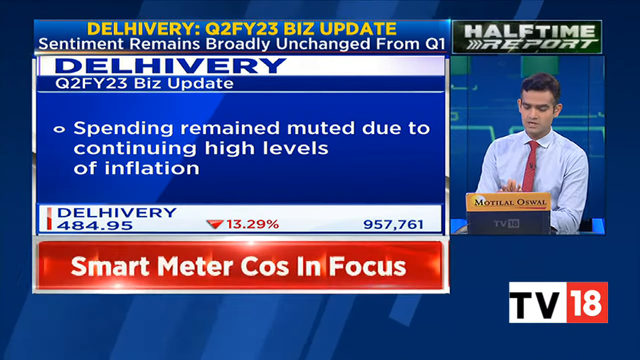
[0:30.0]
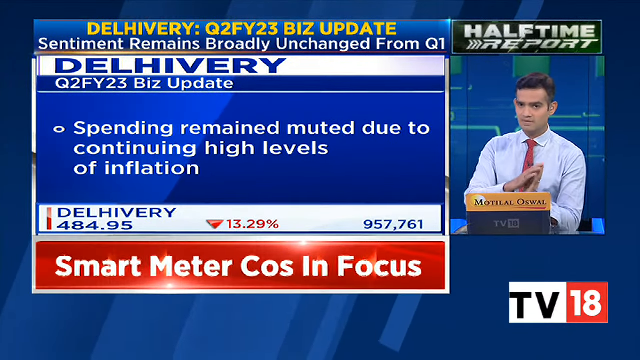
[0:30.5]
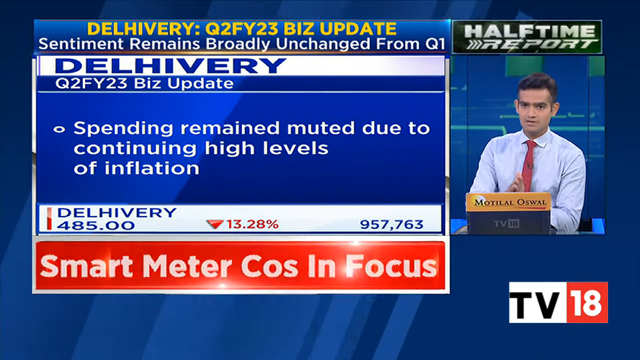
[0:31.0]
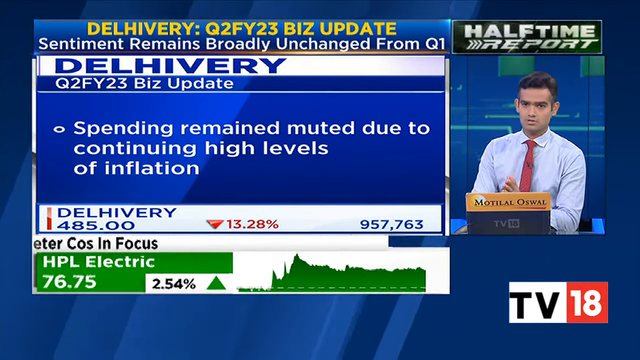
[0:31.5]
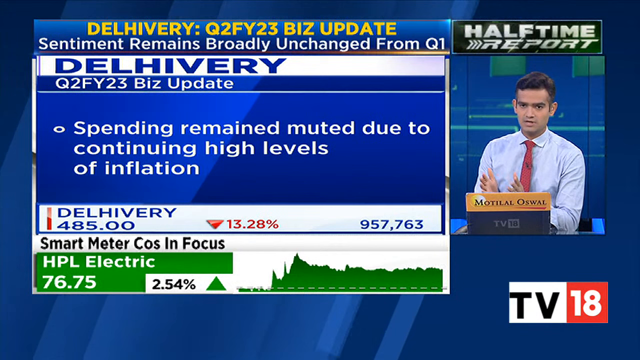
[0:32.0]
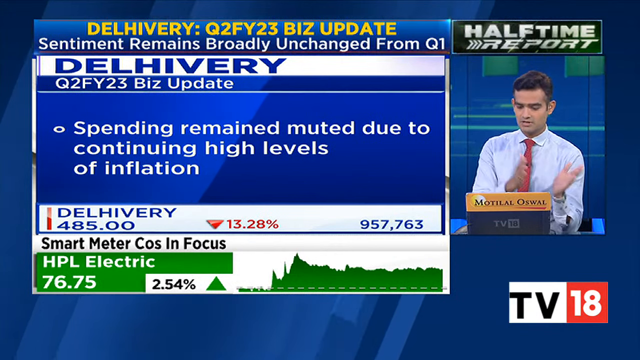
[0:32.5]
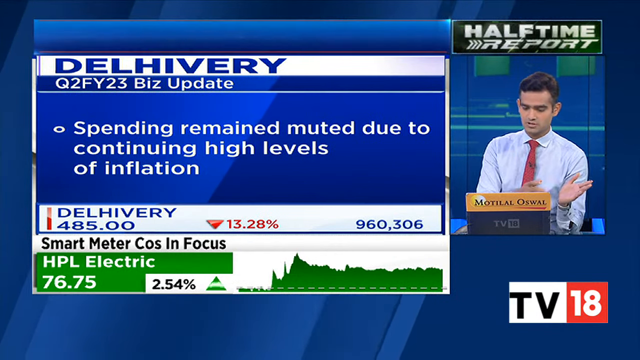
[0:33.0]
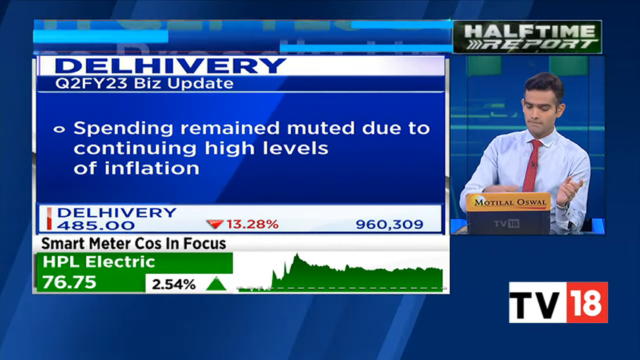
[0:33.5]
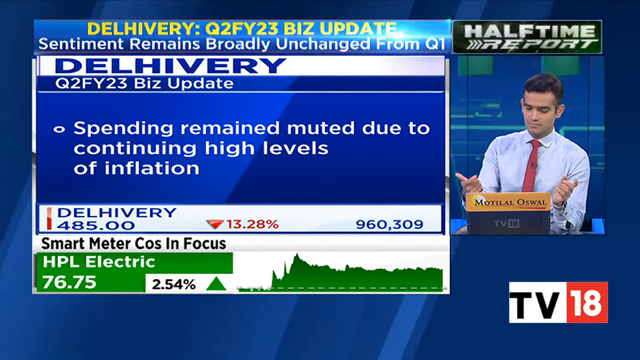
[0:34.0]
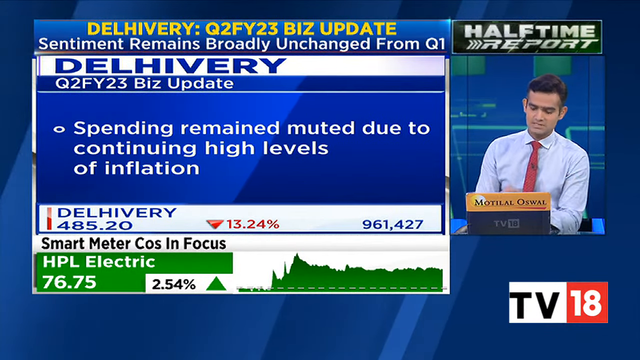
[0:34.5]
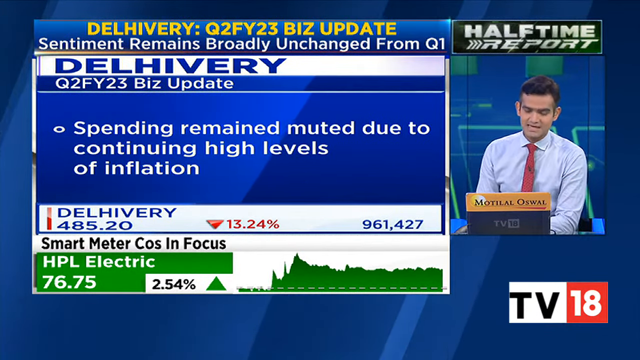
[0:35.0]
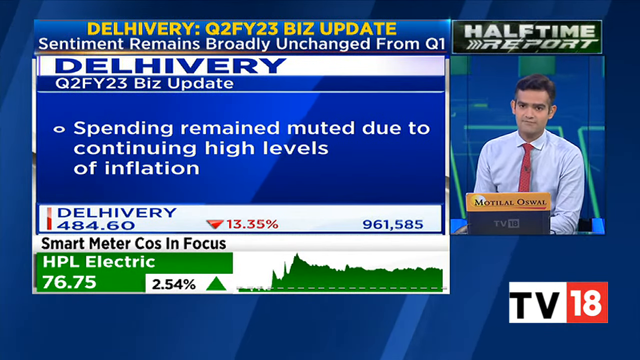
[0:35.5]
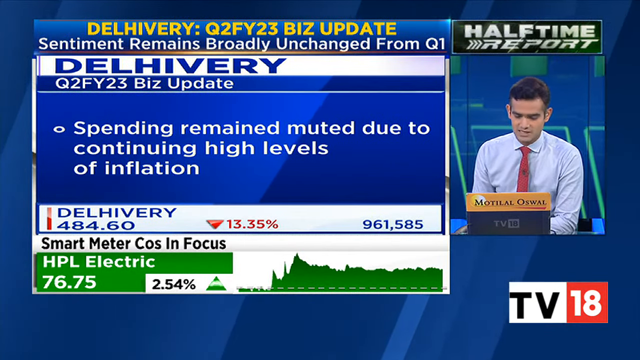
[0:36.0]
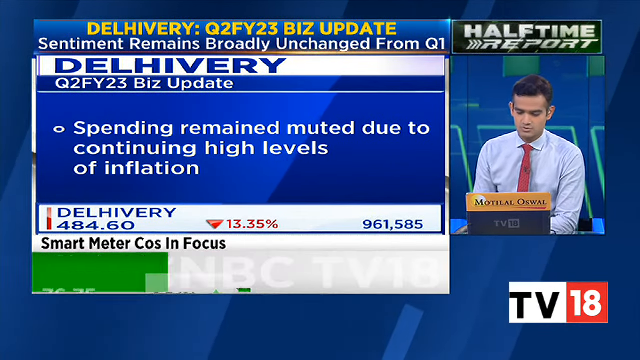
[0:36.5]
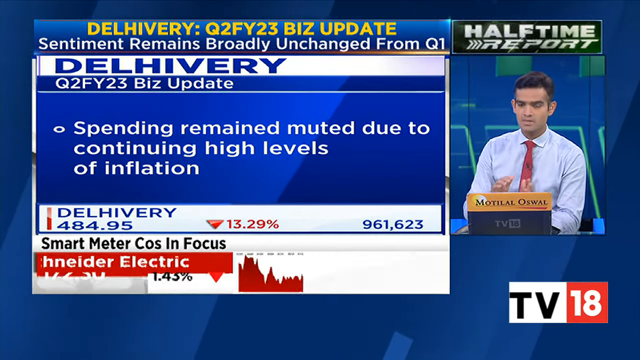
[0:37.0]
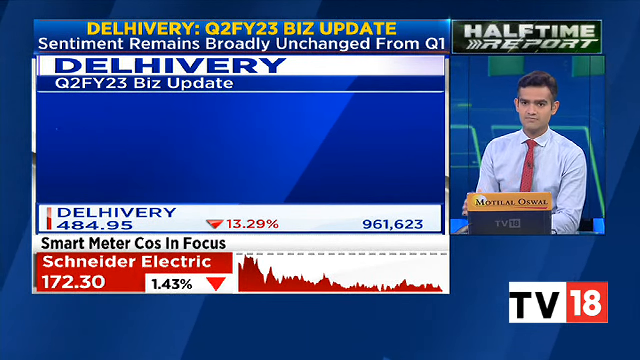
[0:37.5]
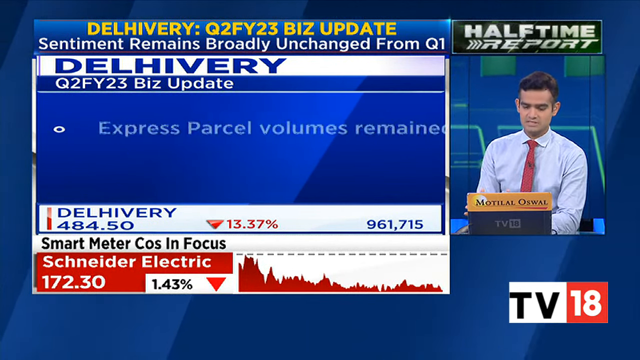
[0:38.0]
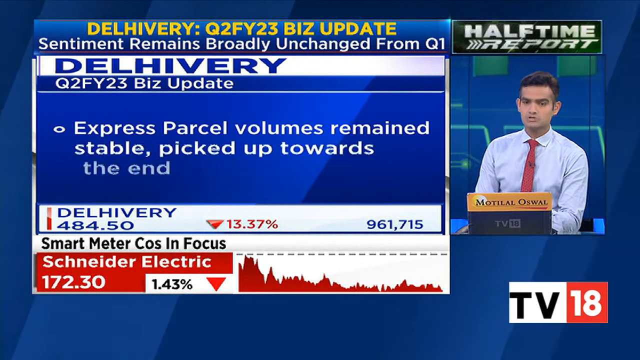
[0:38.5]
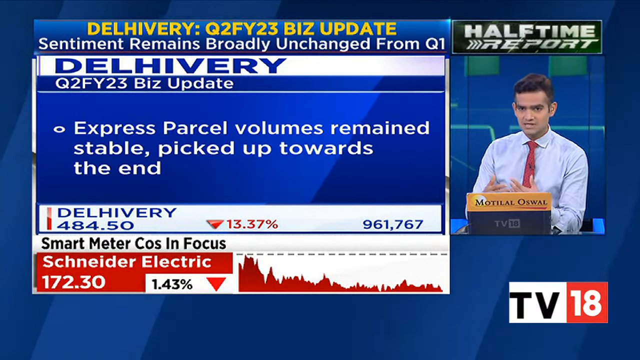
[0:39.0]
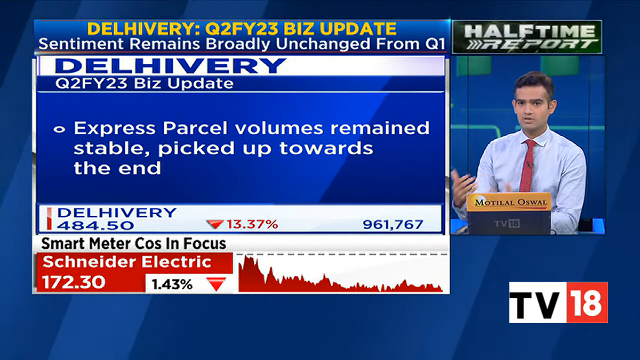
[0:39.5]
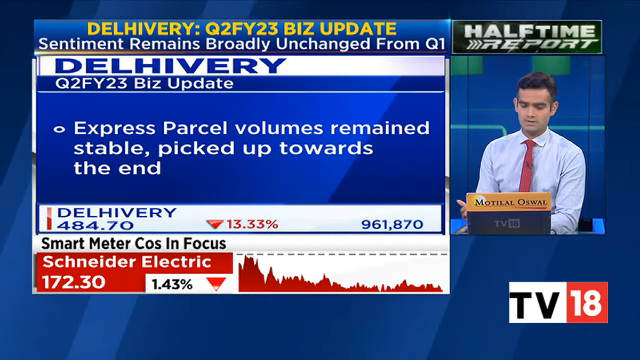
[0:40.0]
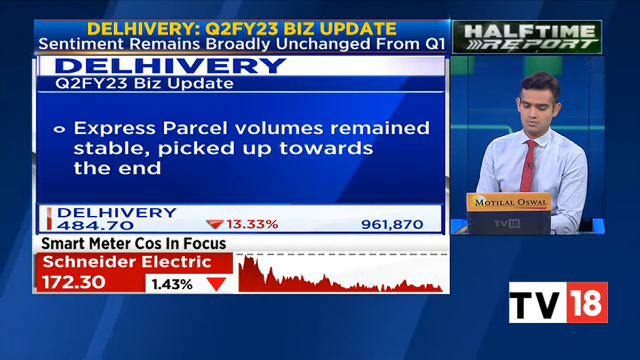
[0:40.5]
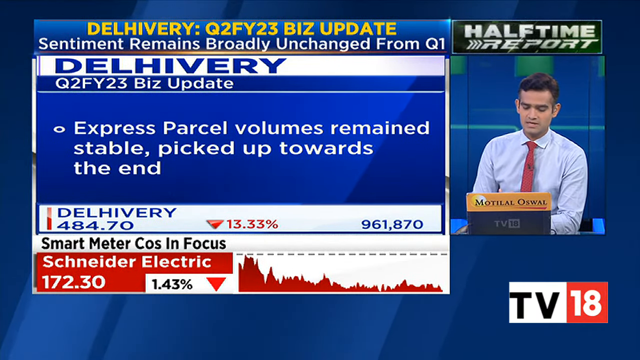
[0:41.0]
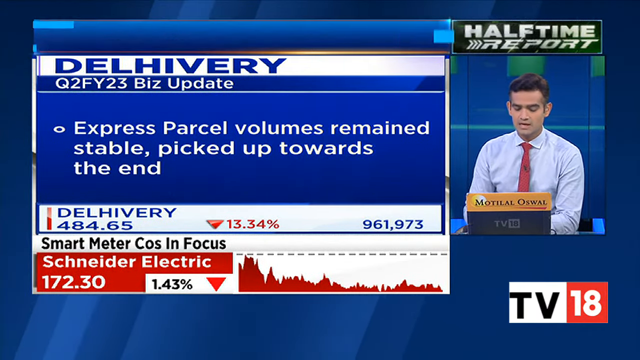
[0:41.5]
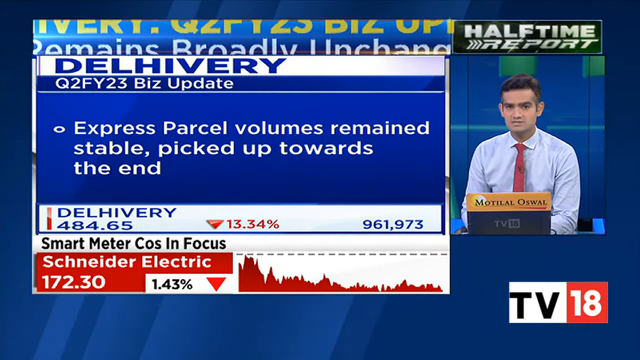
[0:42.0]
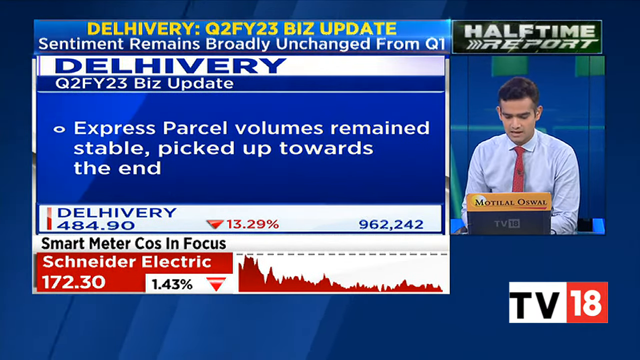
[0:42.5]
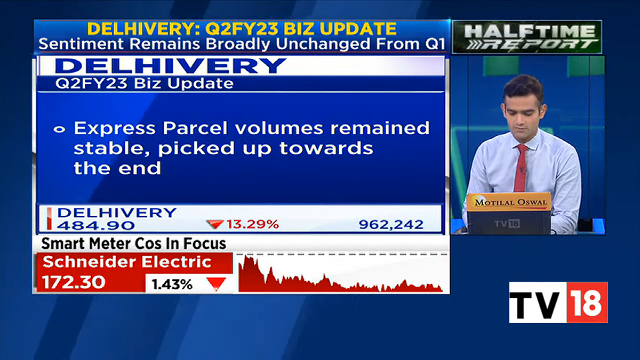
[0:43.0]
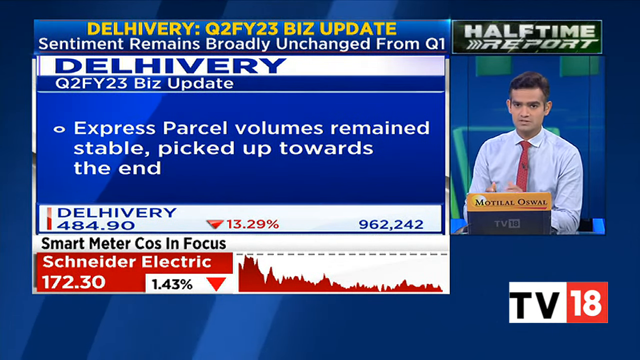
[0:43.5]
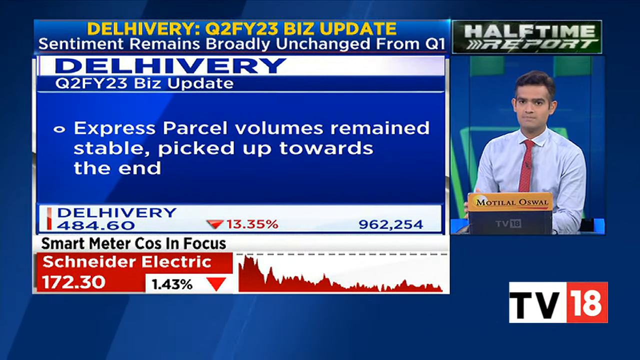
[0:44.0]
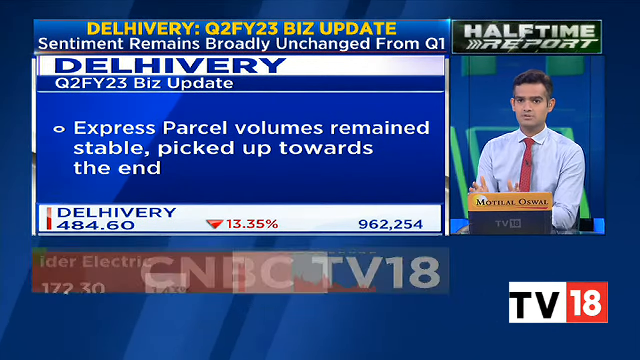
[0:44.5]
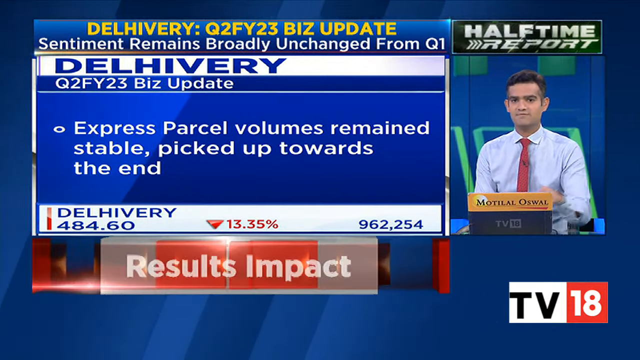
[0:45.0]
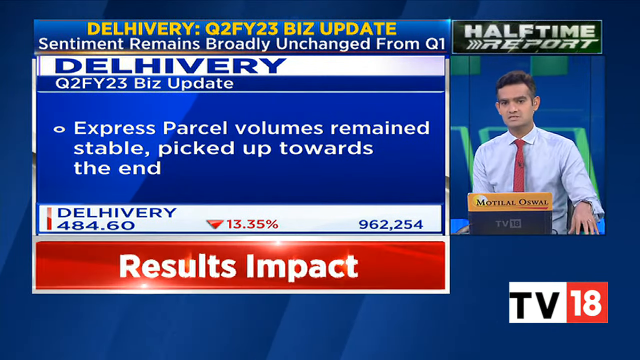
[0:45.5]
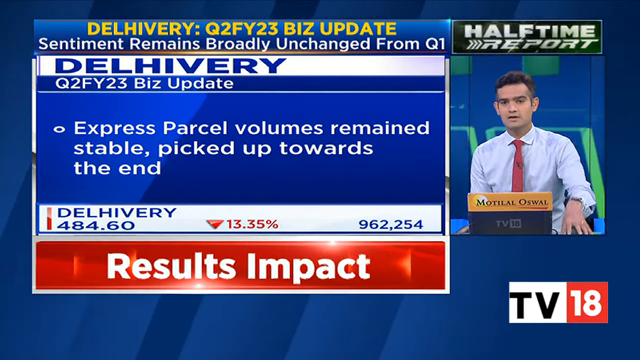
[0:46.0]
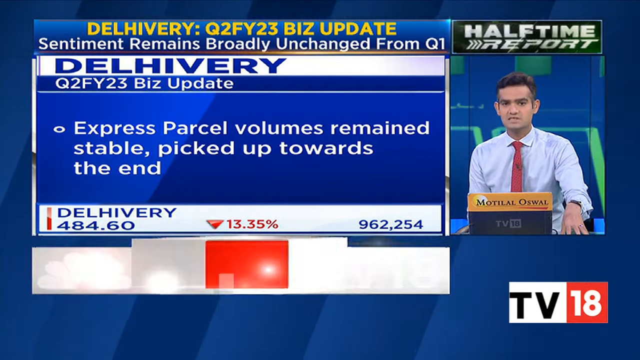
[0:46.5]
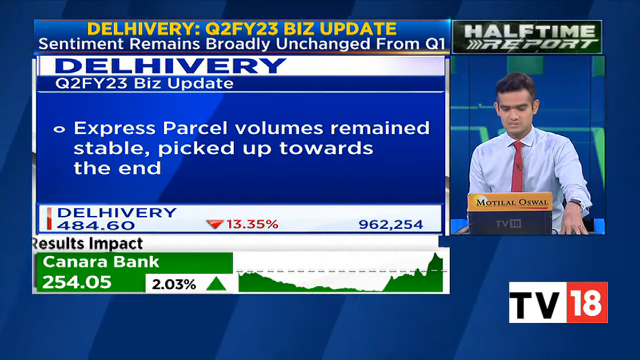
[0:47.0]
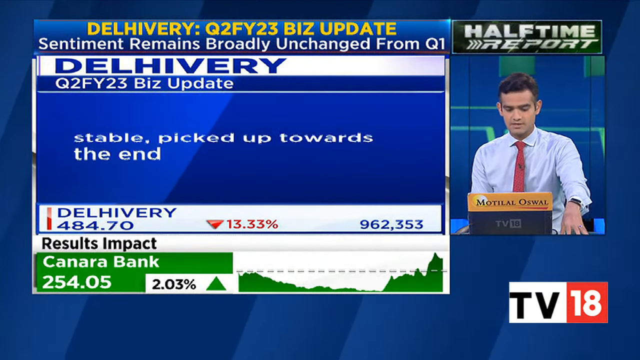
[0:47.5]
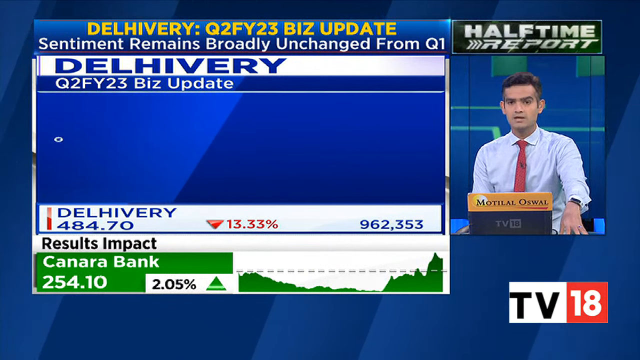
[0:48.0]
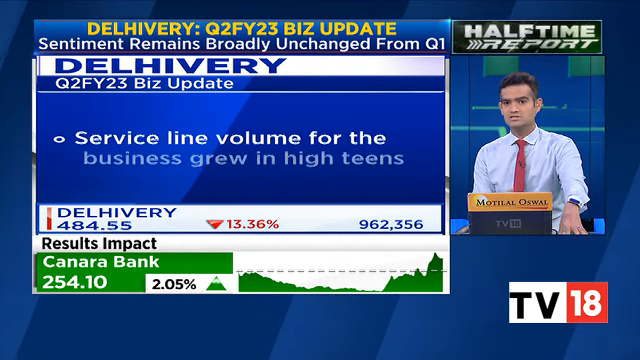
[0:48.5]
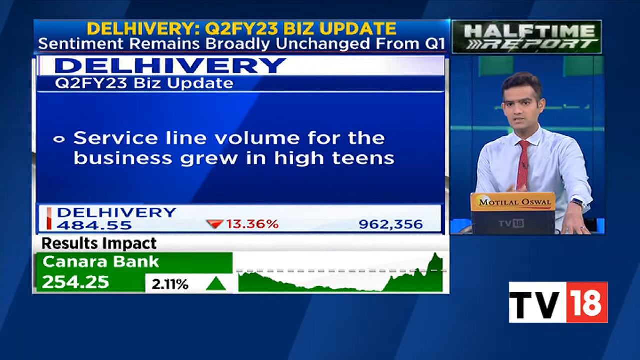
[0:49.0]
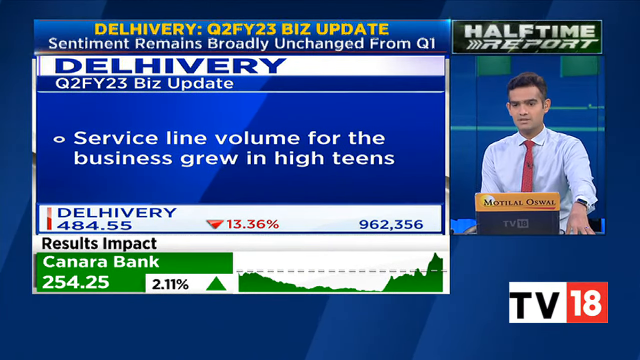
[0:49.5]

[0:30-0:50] A red banner with white text at the bottom begins with "smart meter," and the focus is on a stock called HPL electric, which is up 2.54 percent today. The man is talking. Schneider electric is then shown going down by 1.43 percent, with the red banner at the bottom. The business update for delivery continues with "express parcel volumes remain stable picked up towards the end." The man gestures toward that screen as he talks, and he has a screen in front of him that he keeps looking down at for reference. The red banner at the bottom then changes to "results impact," and the Canara Bank stock is shown increasing by 2.05 percent. The delivery business update then states that the service line volume for the business grew in the high teens.